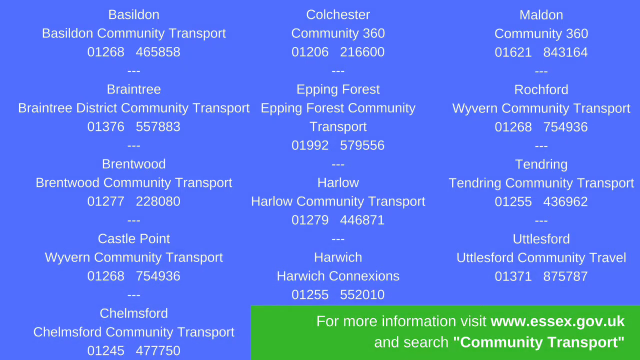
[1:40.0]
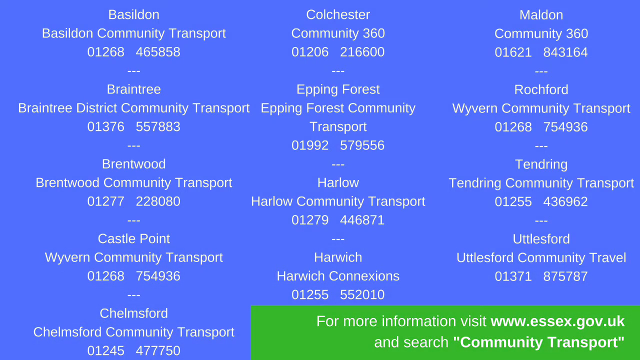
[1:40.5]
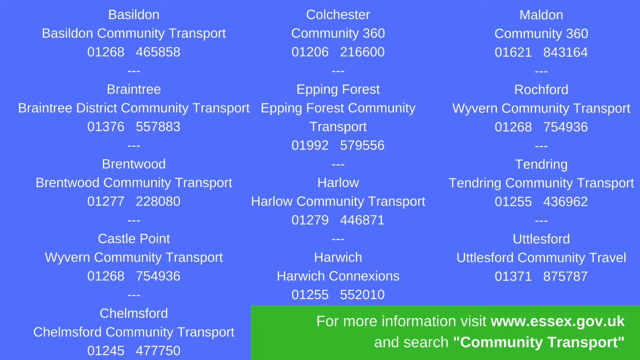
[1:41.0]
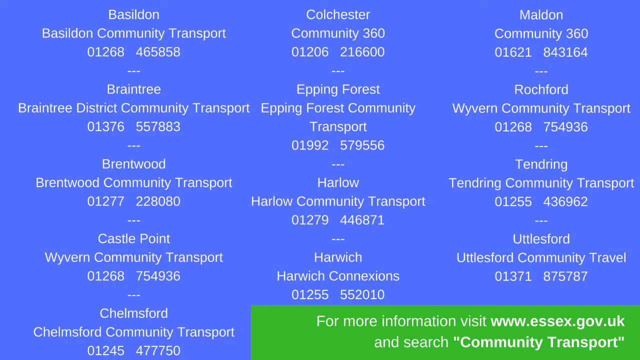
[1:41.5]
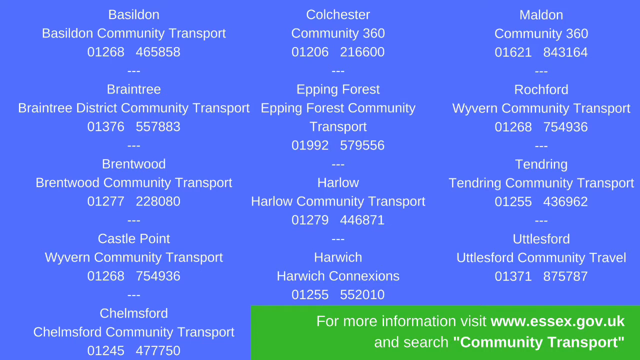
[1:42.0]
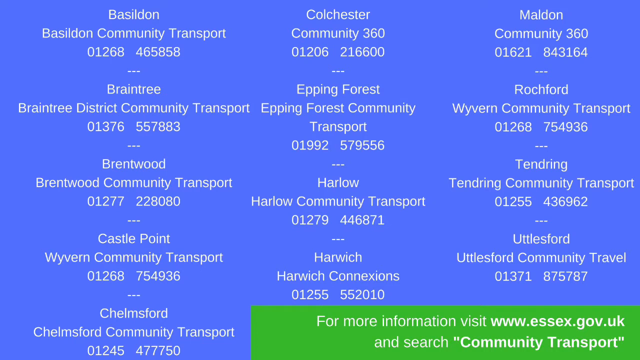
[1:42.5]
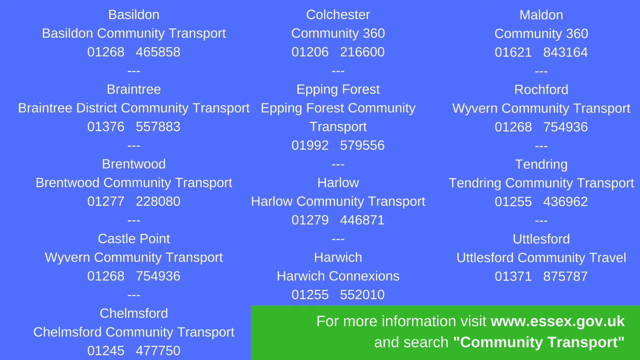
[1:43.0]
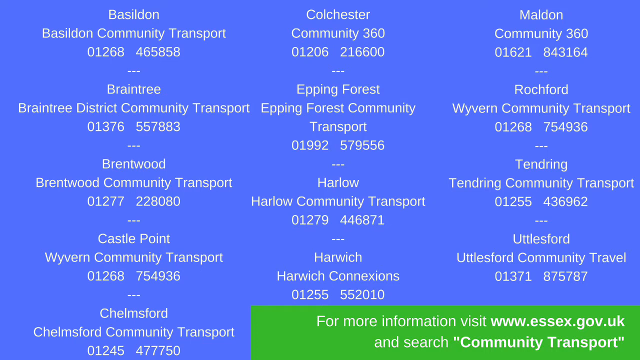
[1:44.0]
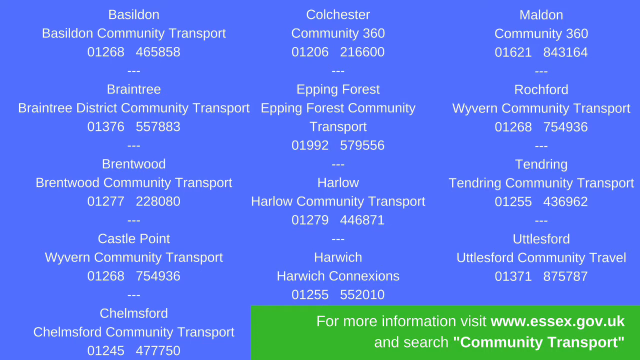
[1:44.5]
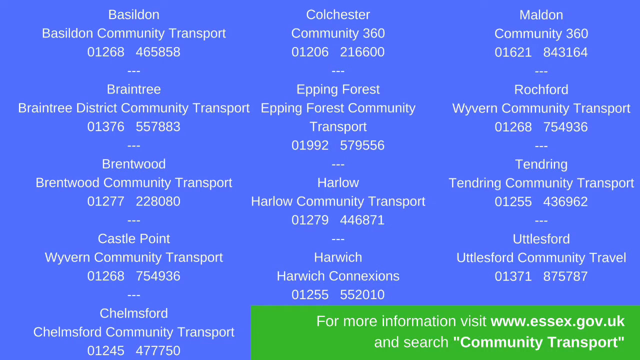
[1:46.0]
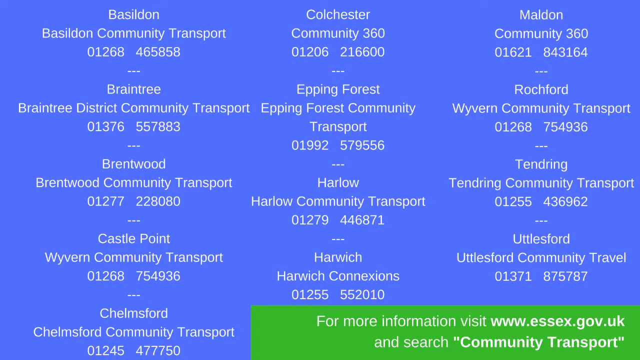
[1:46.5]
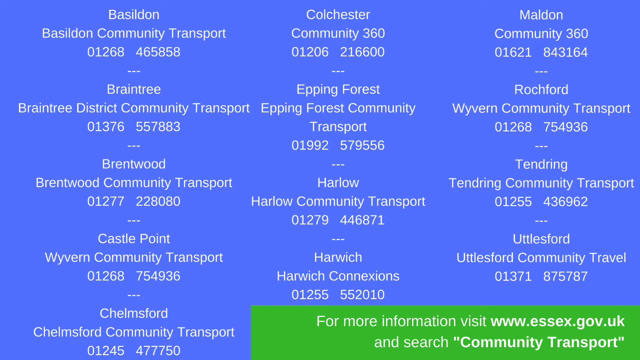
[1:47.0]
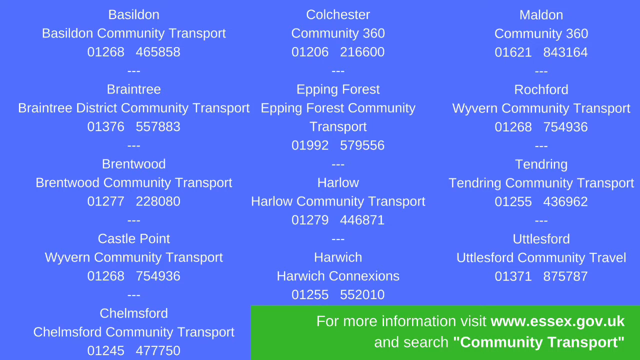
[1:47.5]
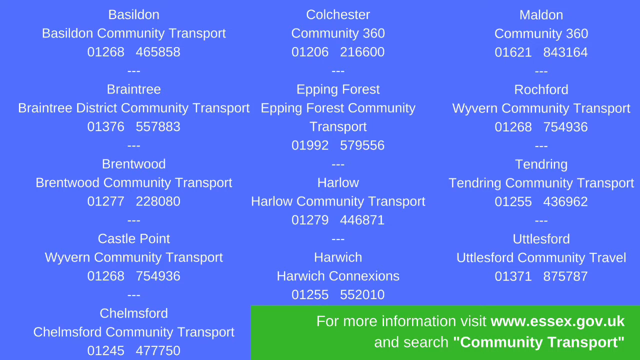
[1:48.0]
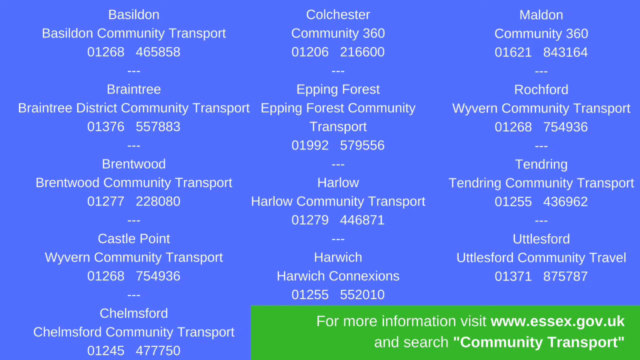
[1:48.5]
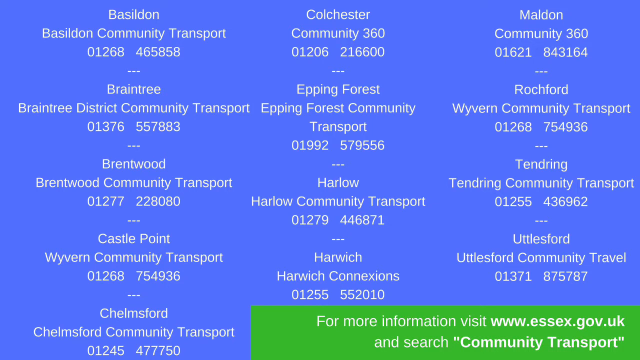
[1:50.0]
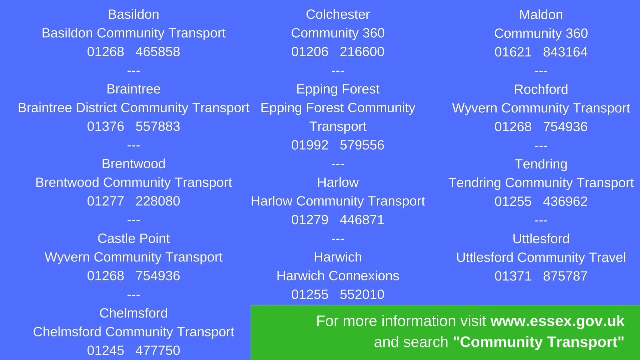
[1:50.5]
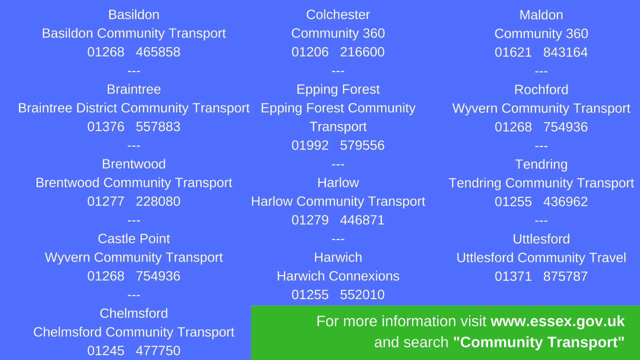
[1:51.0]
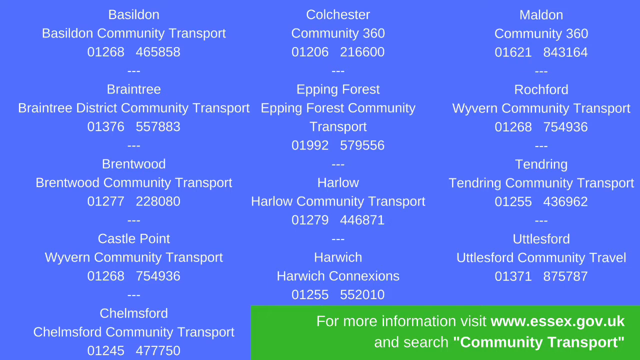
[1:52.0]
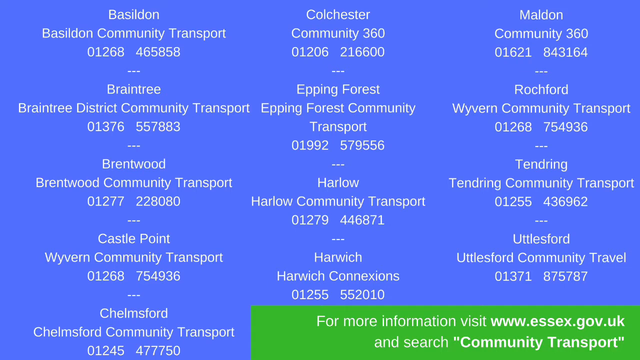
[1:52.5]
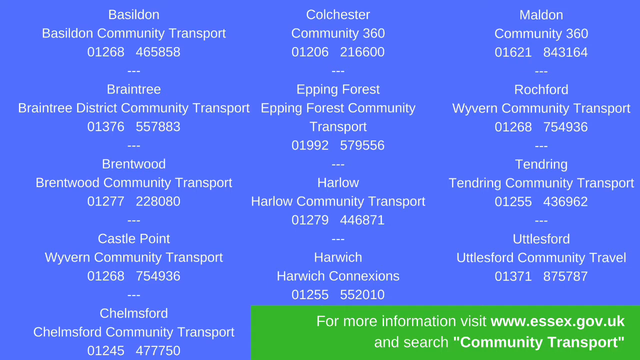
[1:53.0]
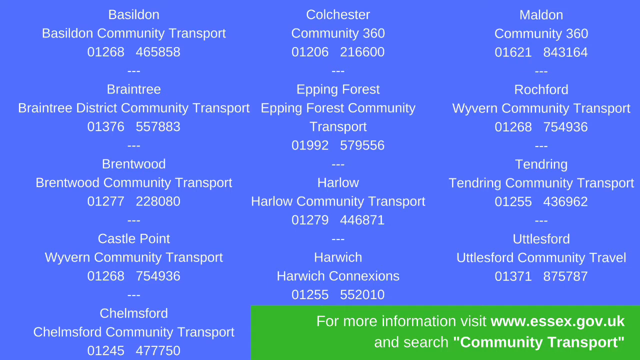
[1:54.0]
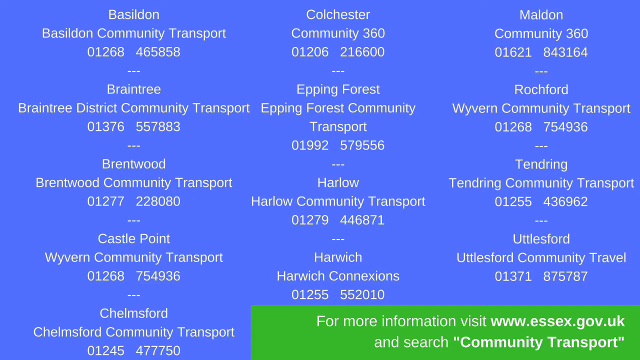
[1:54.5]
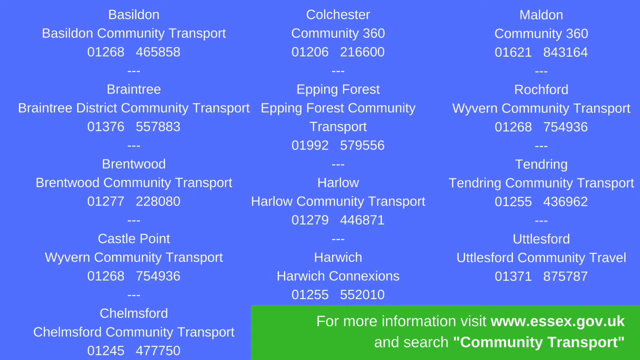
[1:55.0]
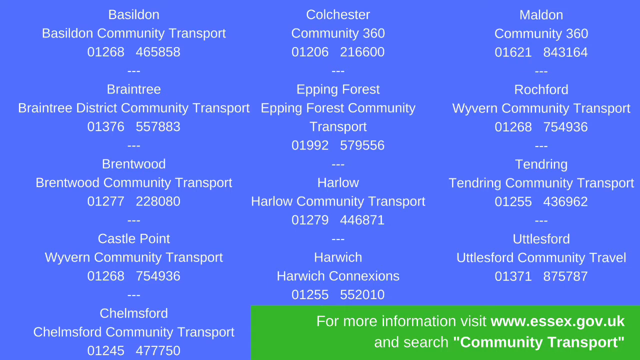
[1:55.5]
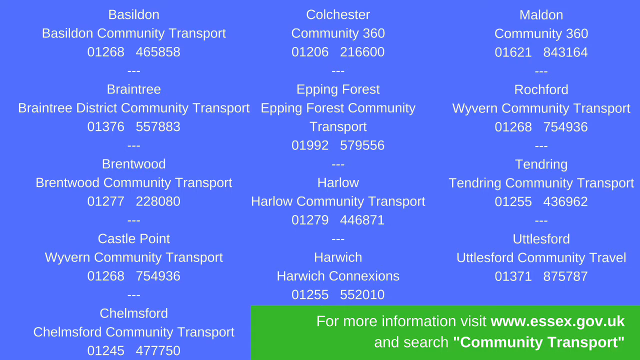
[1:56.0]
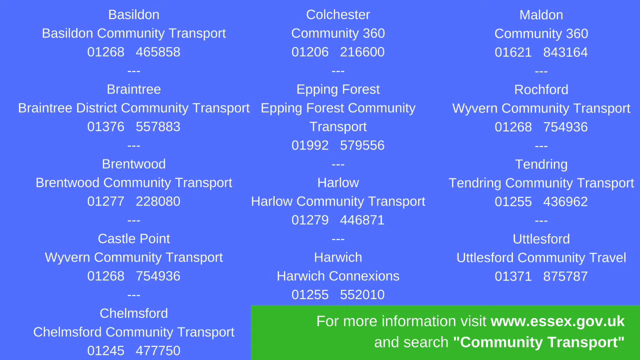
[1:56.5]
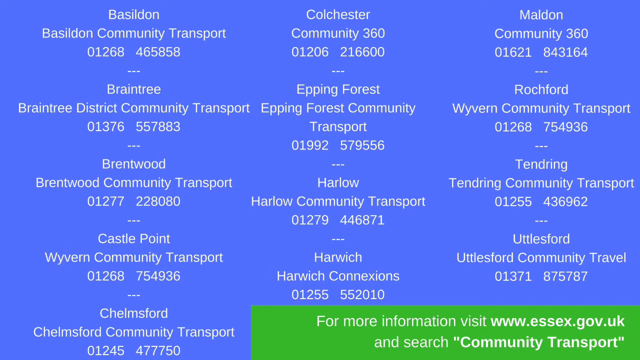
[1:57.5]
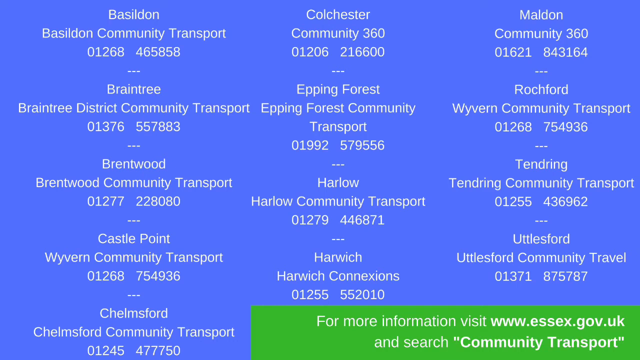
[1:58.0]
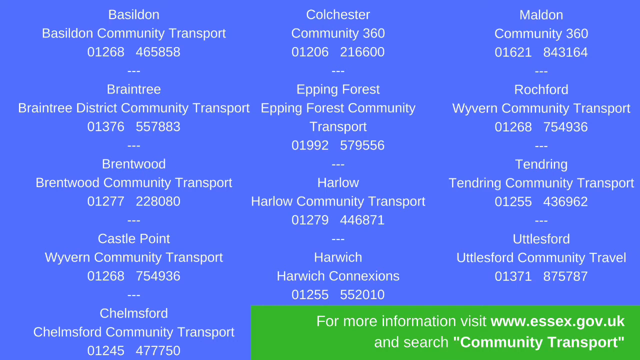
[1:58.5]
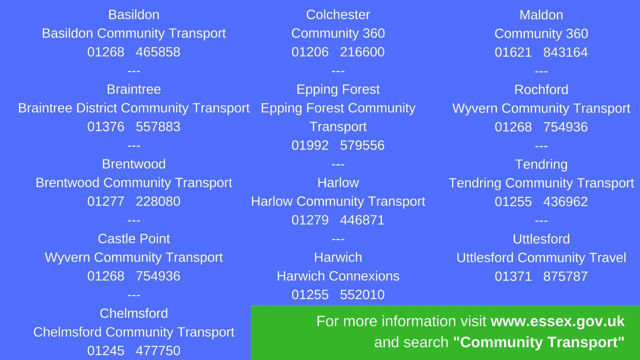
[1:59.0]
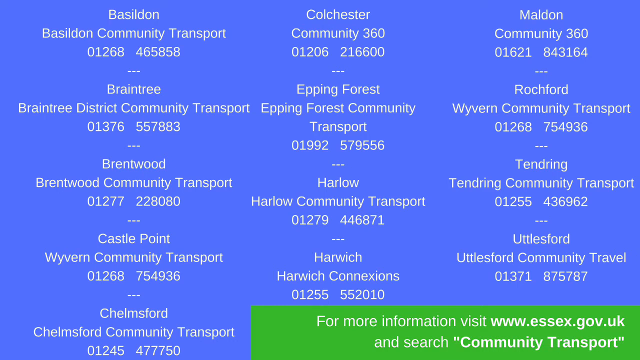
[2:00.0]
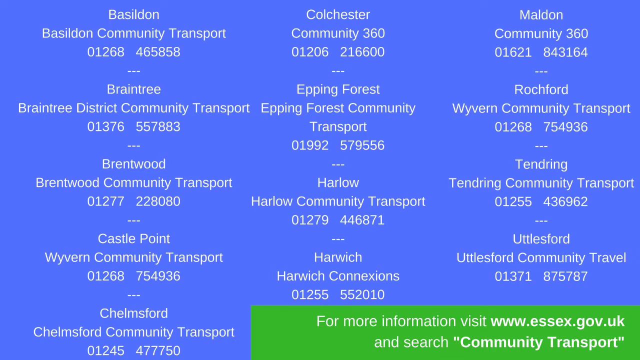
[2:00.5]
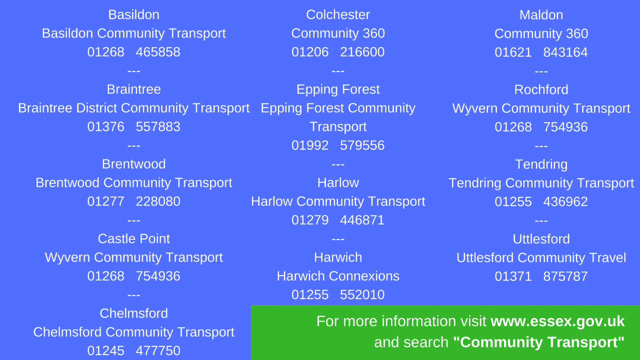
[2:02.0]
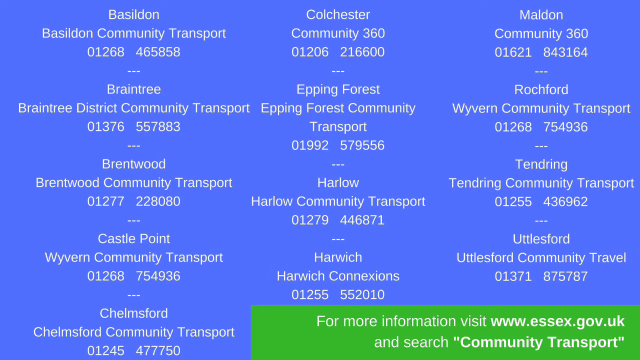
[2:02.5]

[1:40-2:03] A bluish-purple background lists community transport companies for different regions in three columns. Each listing gives the city first, the name of the transport company underneath, and the phone number below that, with what looks like three dashed lines separating it from the next listing. The first column has five listings, and the second and third columns have four each. The locations are Basildon, Braintree, Brentwood, Castle Point, Chelmsford, Colchester, Epping Forest, Harlow, Harwich, Maldon, Rochford, Tendring and Uttlesford. At the bottom right of the screen, a long green rectangular box reads in white font "for more information, visit www.essex.gov.uk and search "community transport"". The video stays on this screen for about 20 seconds or so.